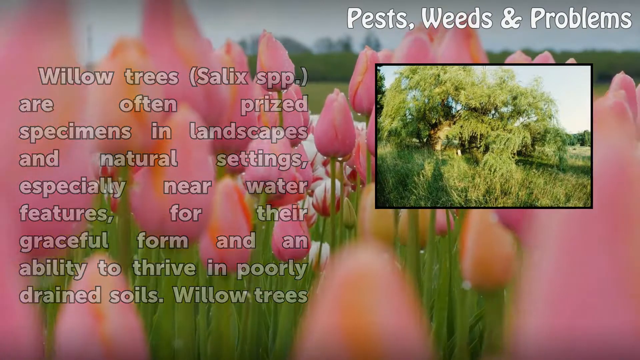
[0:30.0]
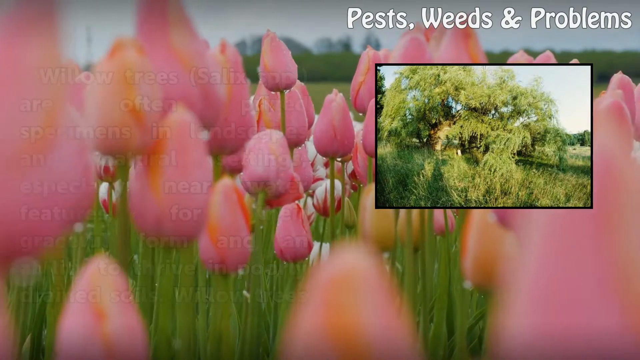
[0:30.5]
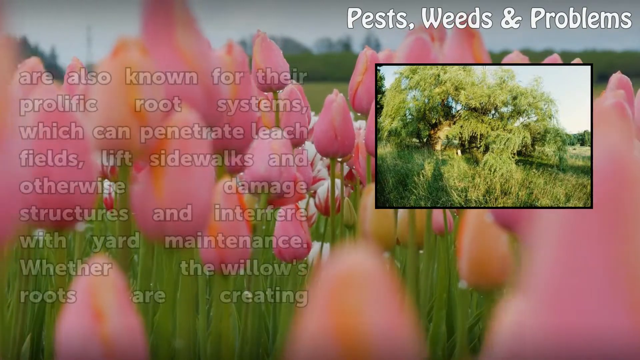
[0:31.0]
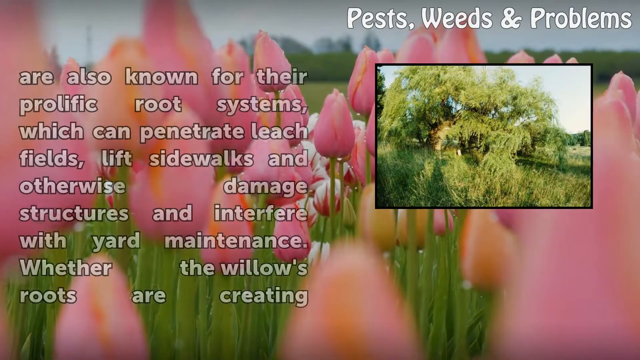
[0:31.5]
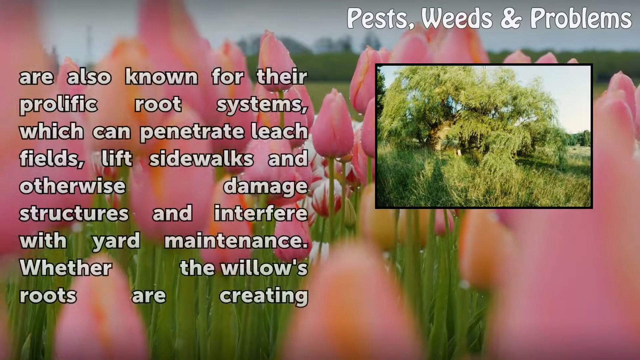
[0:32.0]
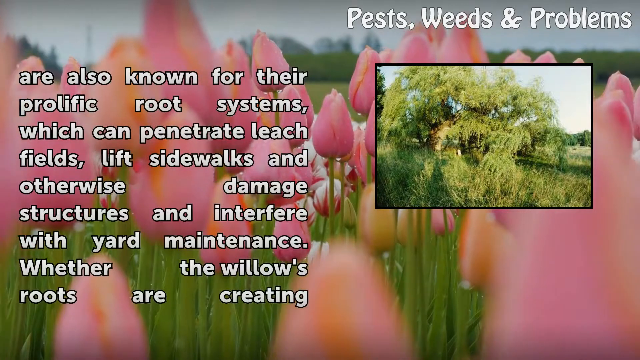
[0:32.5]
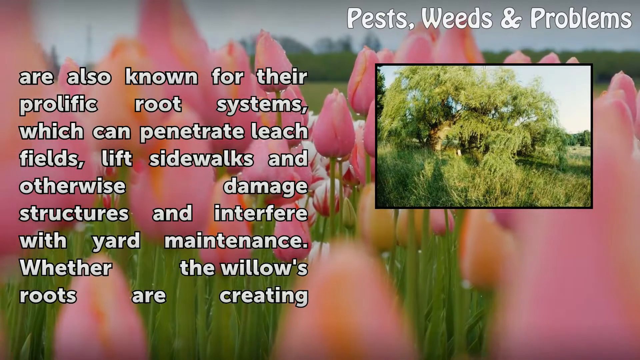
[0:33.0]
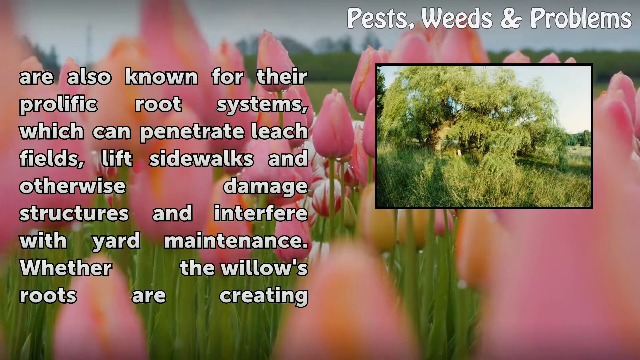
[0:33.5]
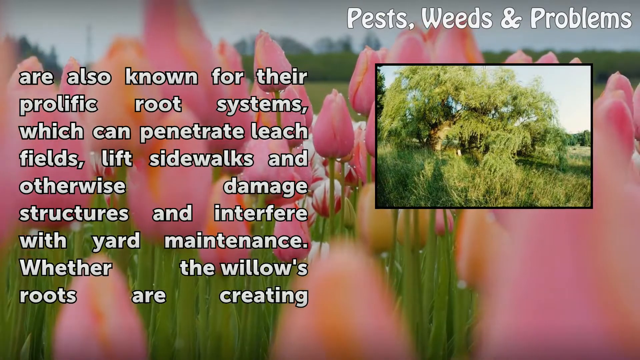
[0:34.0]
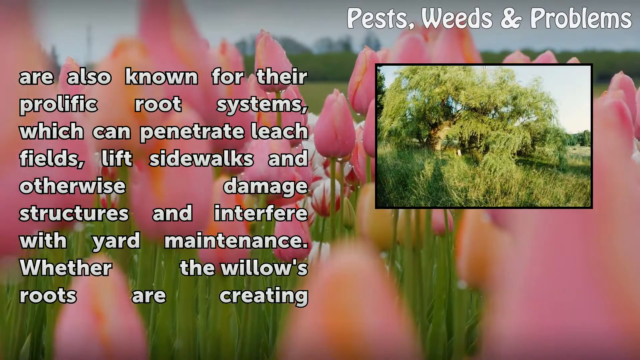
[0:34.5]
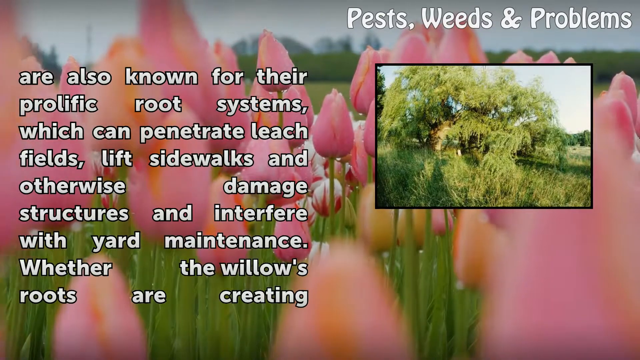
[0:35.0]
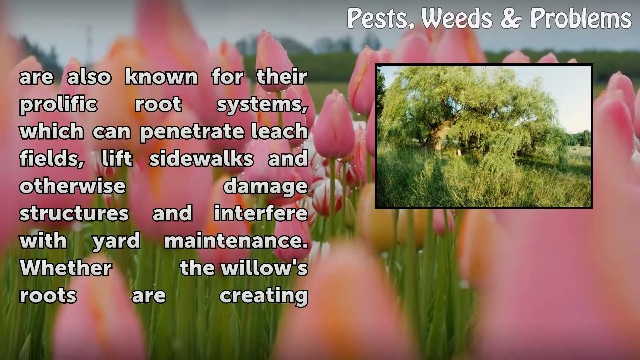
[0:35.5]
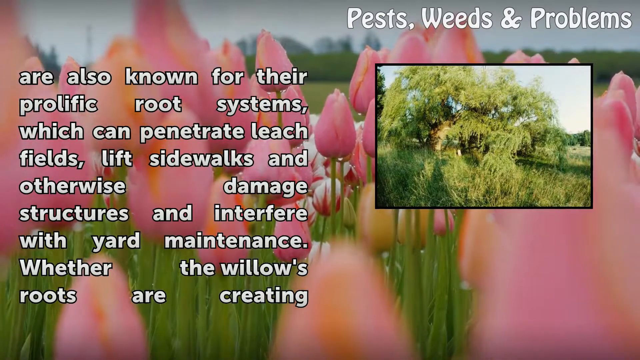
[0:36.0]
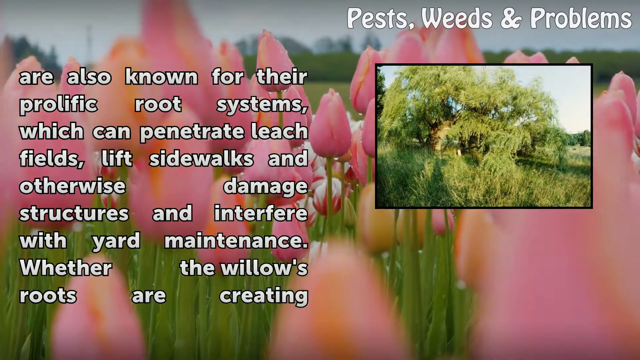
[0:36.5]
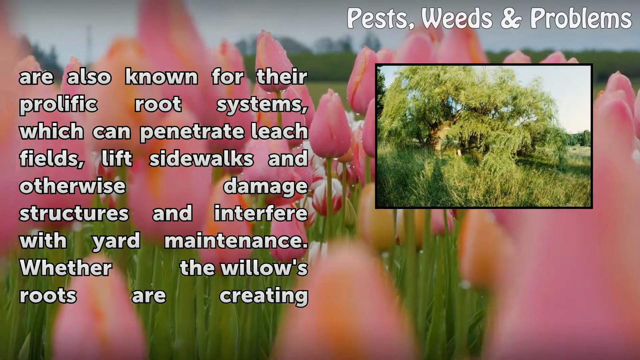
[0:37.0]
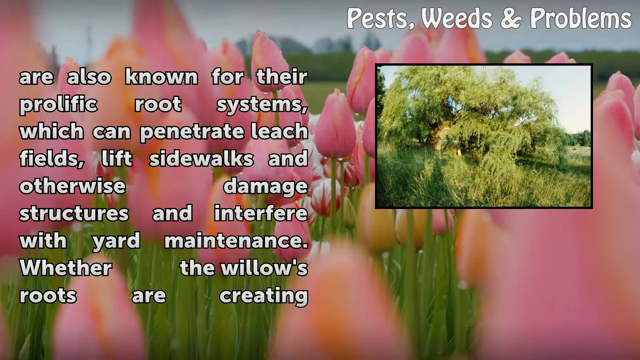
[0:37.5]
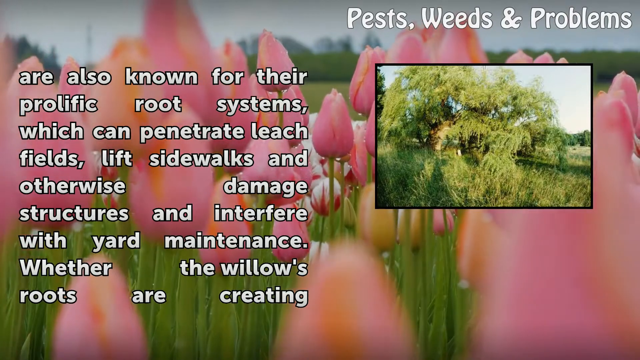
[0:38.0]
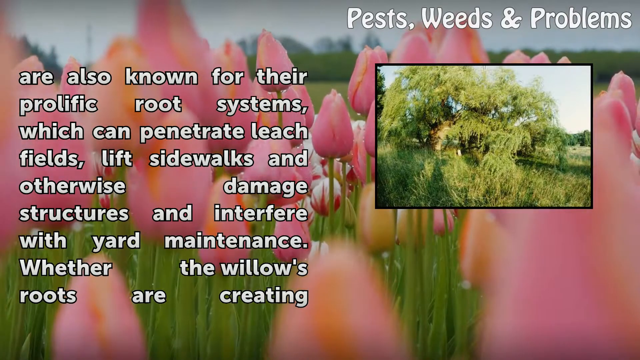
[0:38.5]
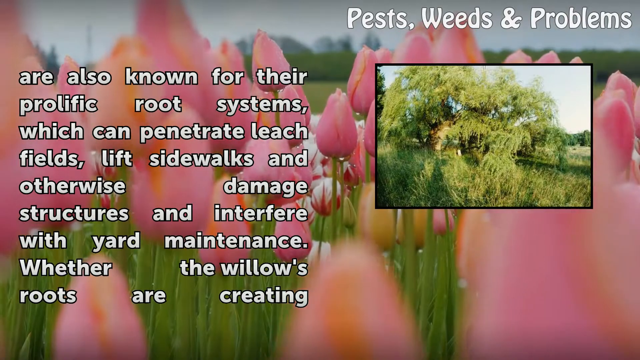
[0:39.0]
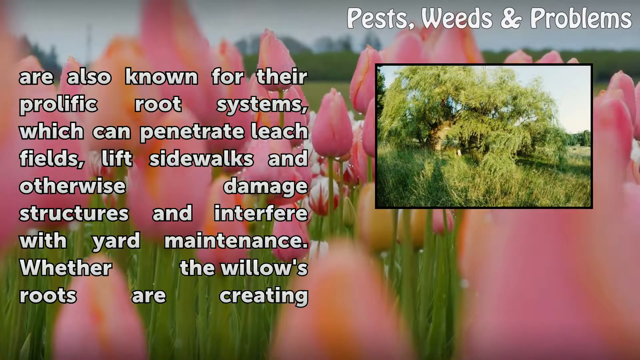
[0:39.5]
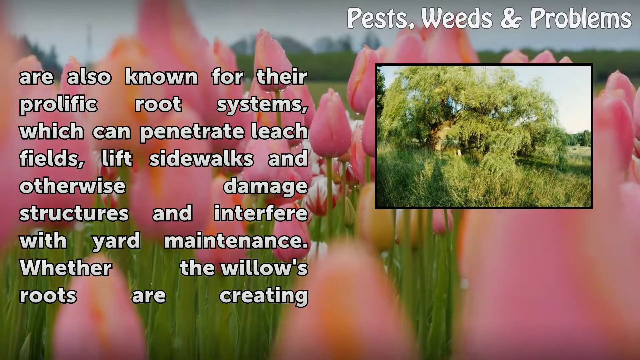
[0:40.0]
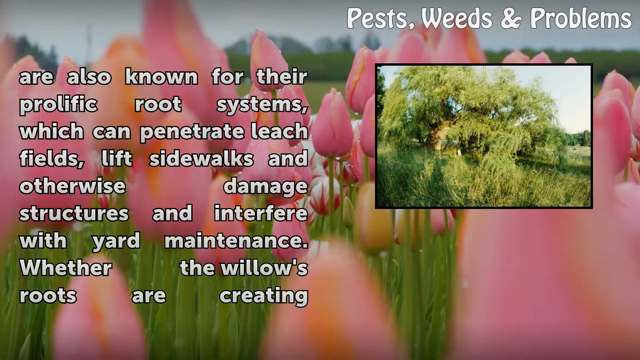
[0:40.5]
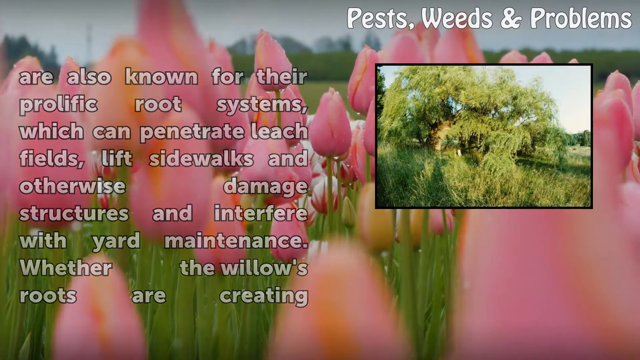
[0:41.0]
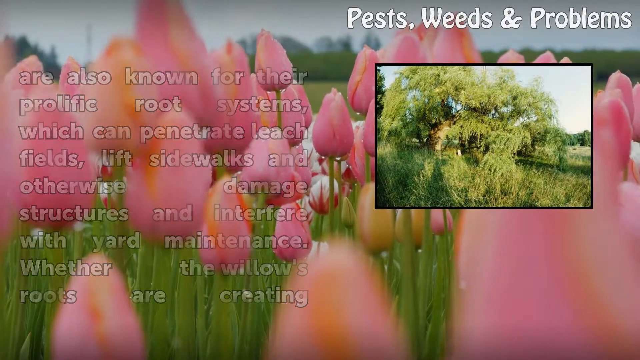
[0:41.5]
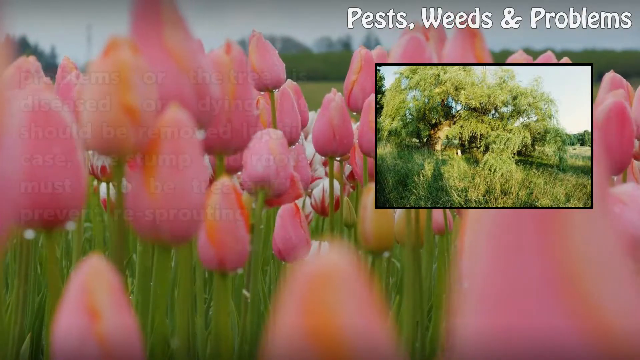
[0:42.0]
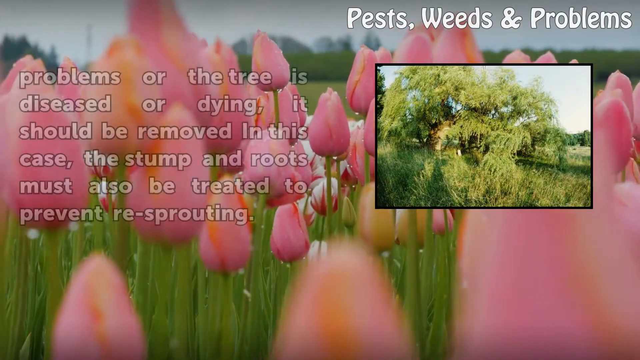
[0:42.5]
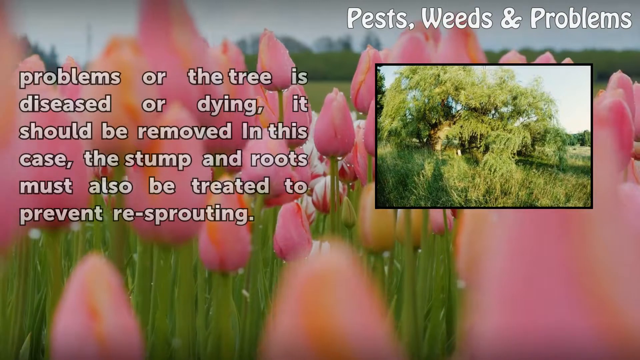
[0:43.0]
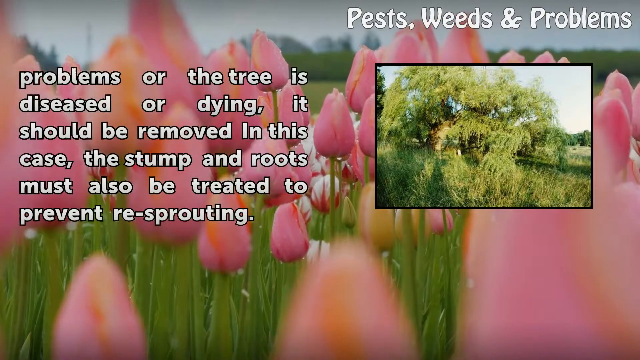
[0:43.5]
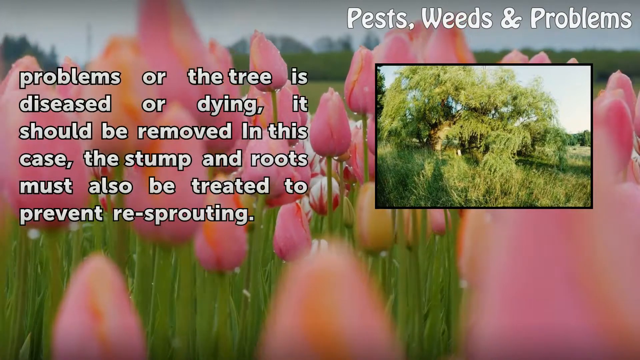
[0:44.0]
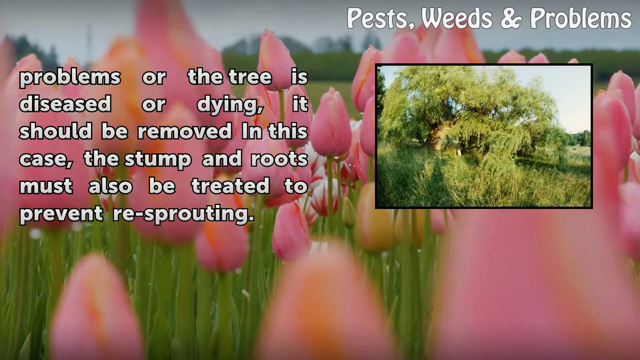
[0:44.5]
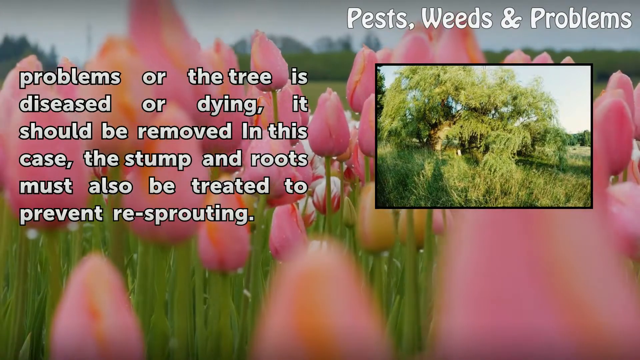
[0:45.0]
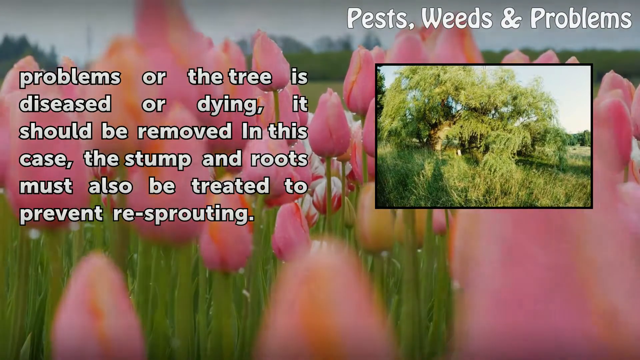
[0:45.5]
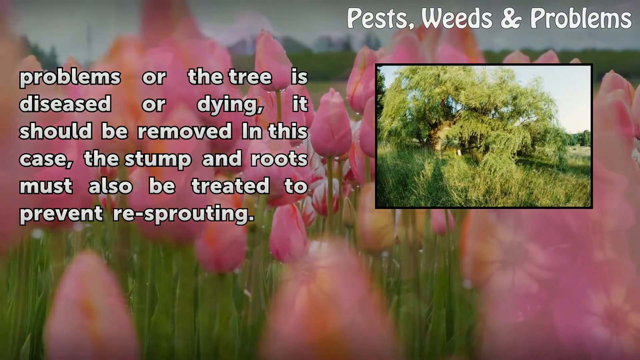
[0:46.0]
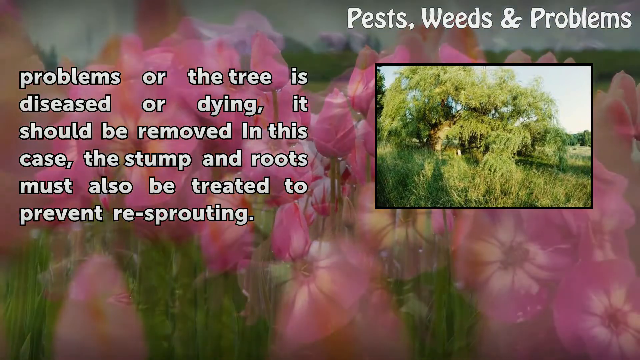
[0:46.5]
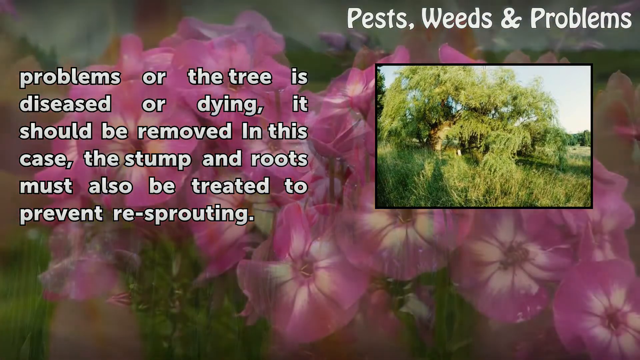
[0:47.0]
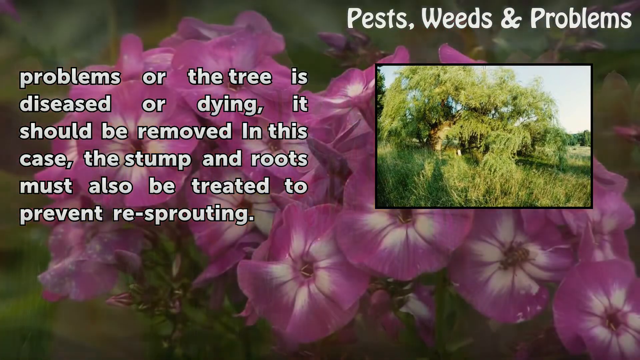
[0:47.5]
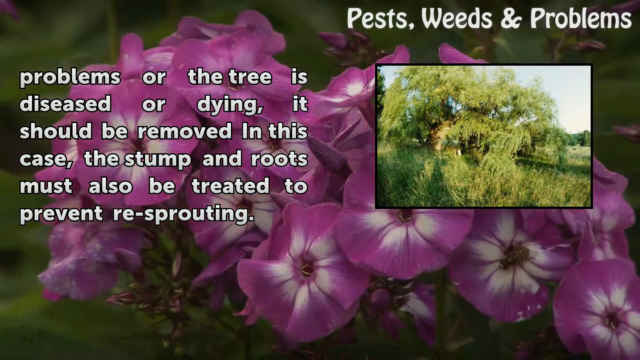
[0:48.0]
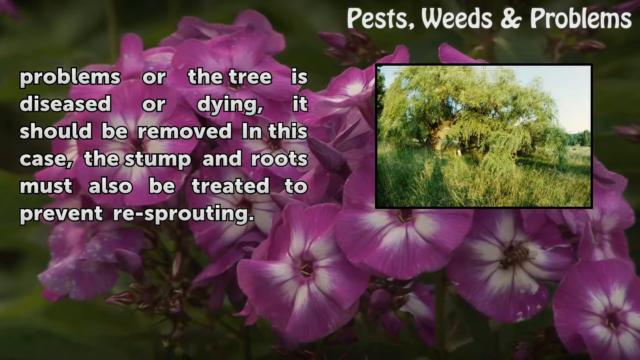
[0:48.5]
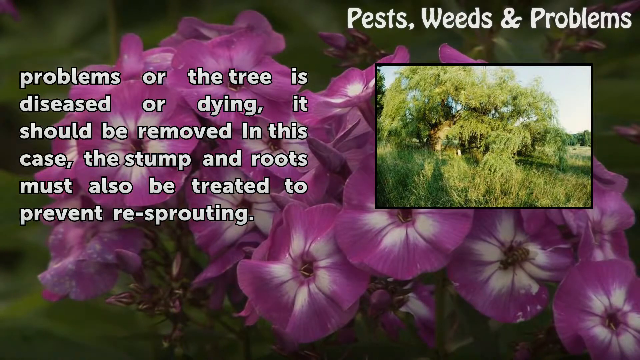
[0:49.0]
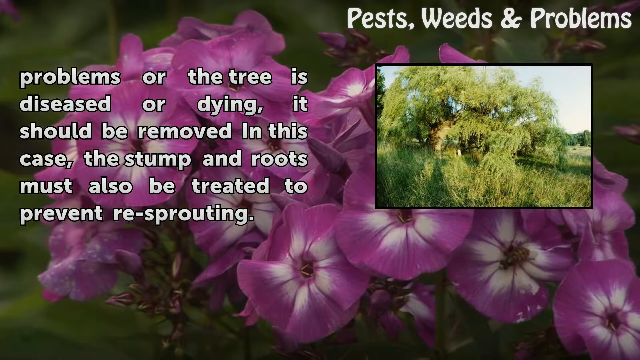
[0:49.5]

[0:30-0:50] The text continues, split across several lines: "willow trees (salix spp.) are often prized specimens and landscapes and natural settings, especially near water features, for their graceful form and ability to thrive and poorly drain soils." Pink flowers are in the background. Further text reads "willow trees are also known for their prolific root systems, which can penetrate leach fields, lift sidewalks and otherwise damaged structures and interfere with yard maintenance. Whether the willows roots are creating problems or the tree is diseased or dying, it should be removed in this case. The stump and roots must also be treated to prevent". On the right side is an image apparently of roots, which looks like trees.